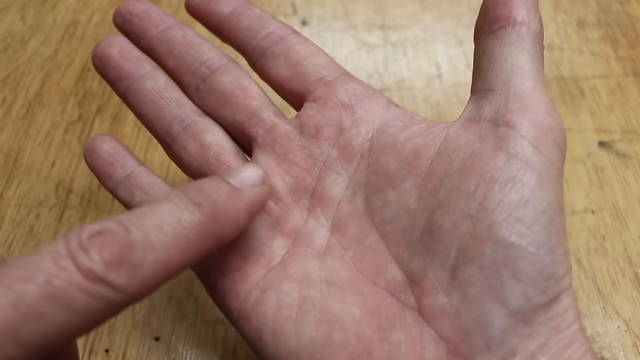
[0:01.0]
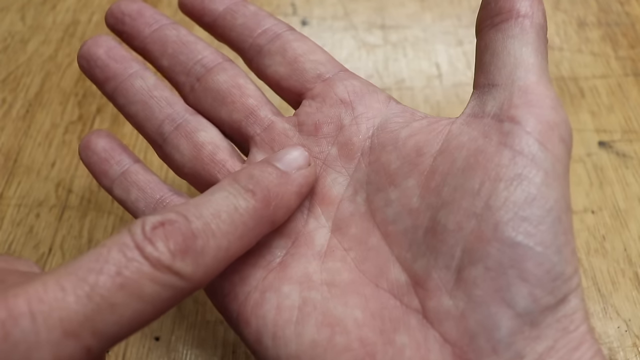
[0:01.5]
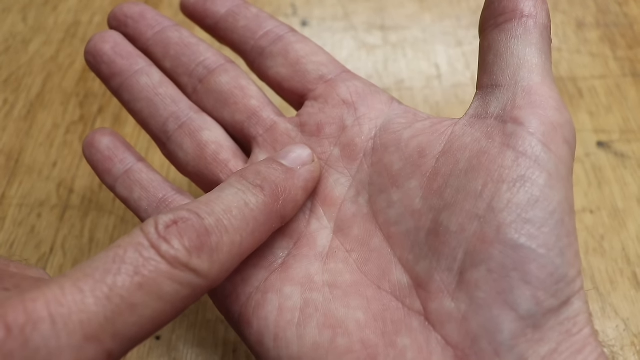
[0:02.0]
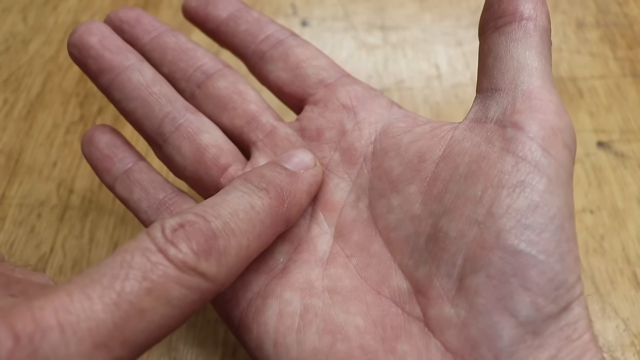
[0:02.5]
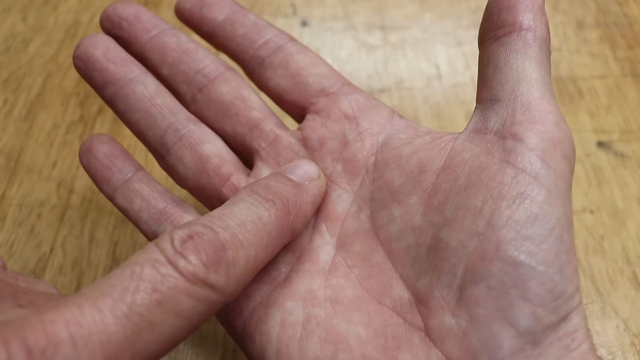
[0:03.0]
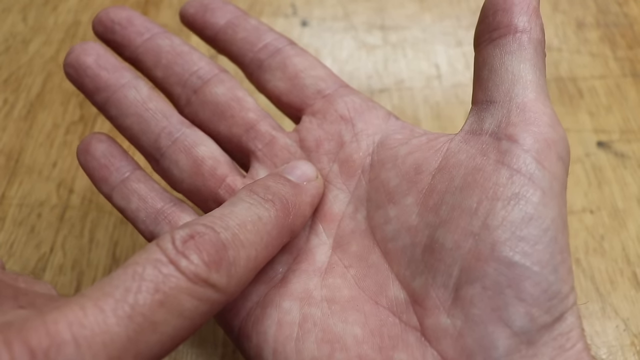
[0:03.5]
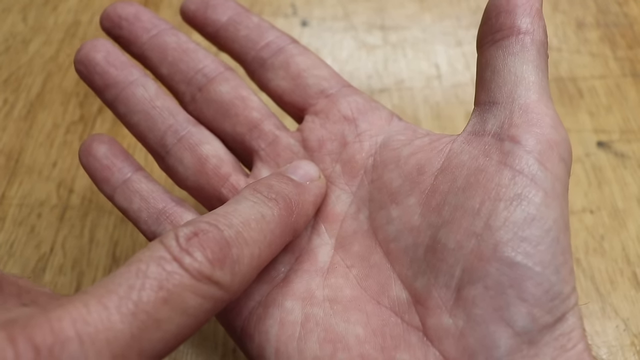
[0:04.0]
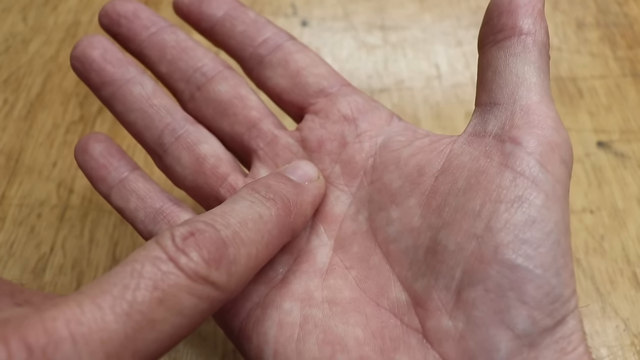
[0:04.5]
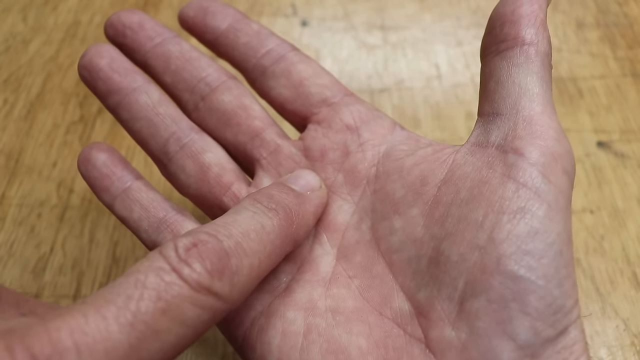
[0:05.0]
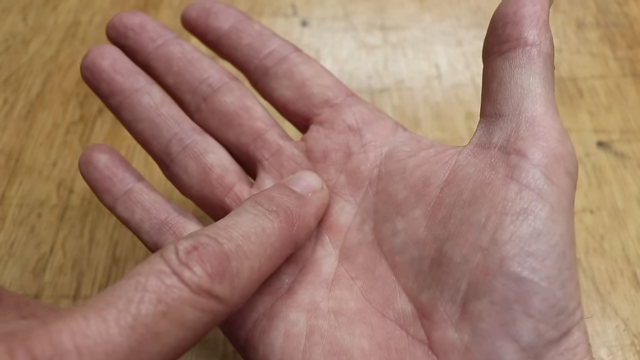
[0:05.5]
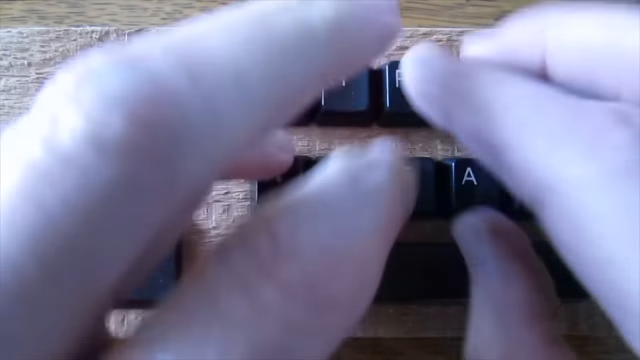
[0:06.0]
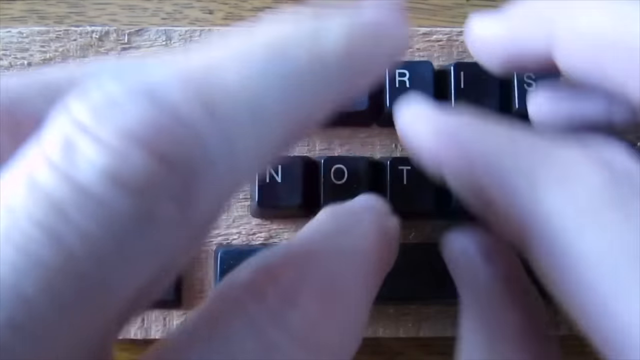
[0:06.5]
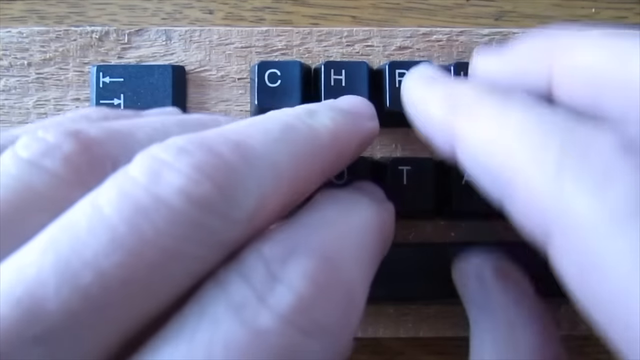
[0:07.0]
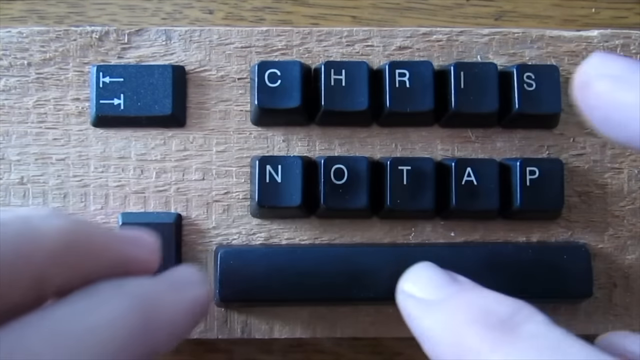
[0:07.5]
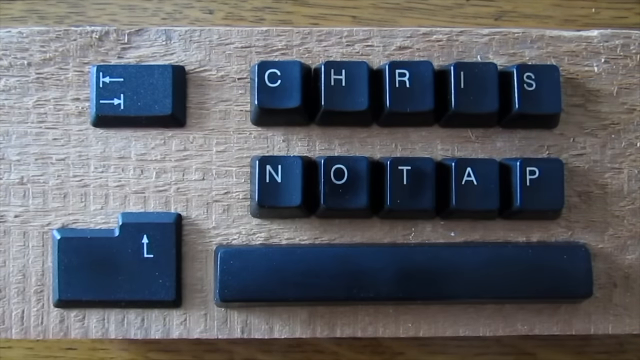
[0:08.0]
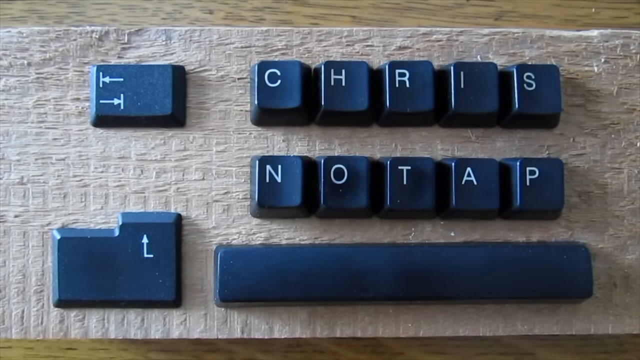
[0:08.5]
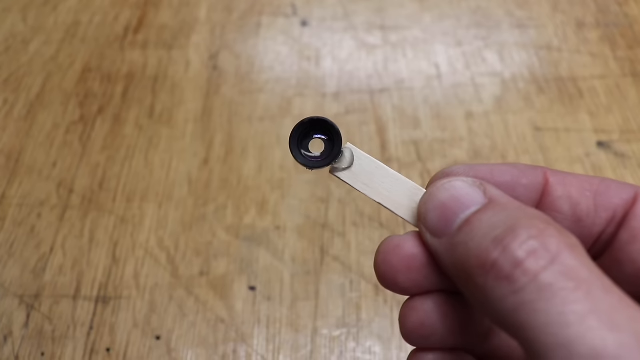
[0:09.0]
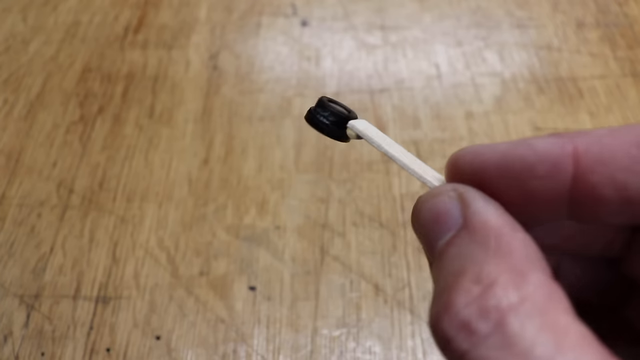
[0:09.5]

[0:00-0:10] Over a wooden table, someone holds their right hand palm up and uses the index finger of their left hand to point to a spot on the right palm between the index finger and the middle finger. The video then cuts to a piece of wood with black keyboard keys stuck to it. There is an arrow key, and to the right of it are the C, H, R, I and S keys. Below that row are the N, O, T, A and P keys. Underneath those is a space bar, with the up arrow key to the left of it.